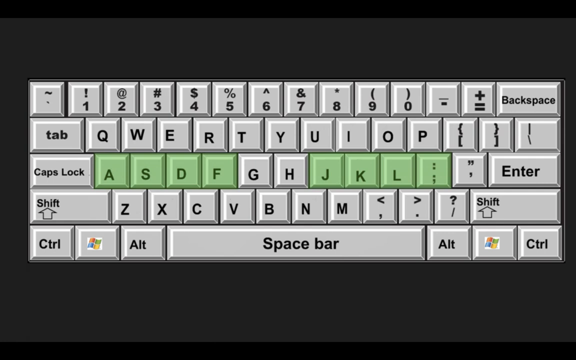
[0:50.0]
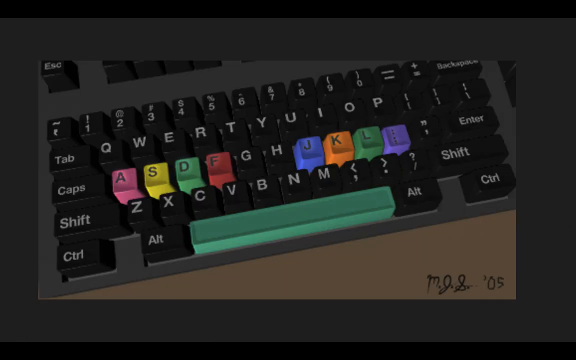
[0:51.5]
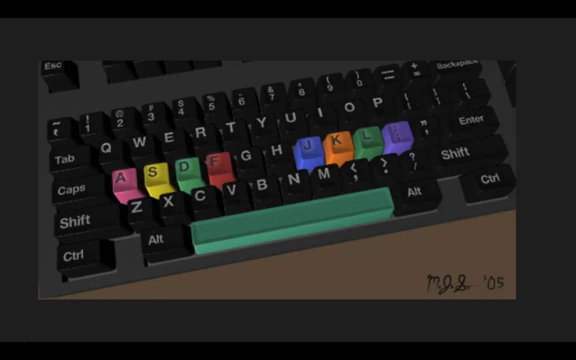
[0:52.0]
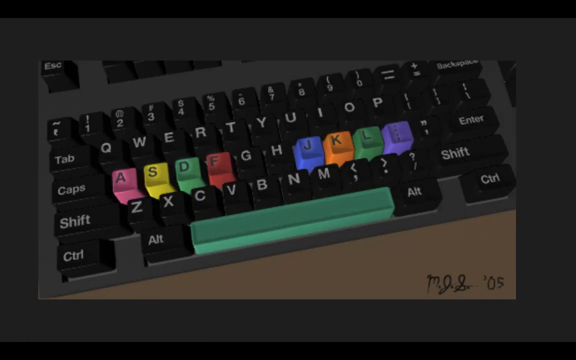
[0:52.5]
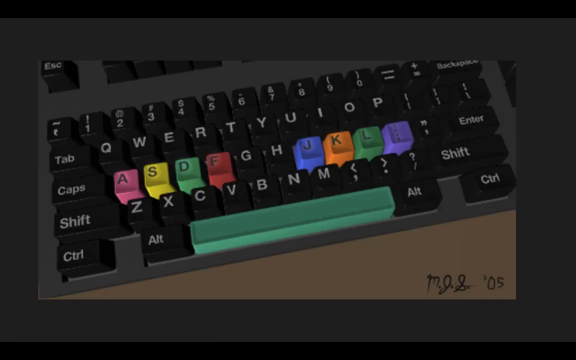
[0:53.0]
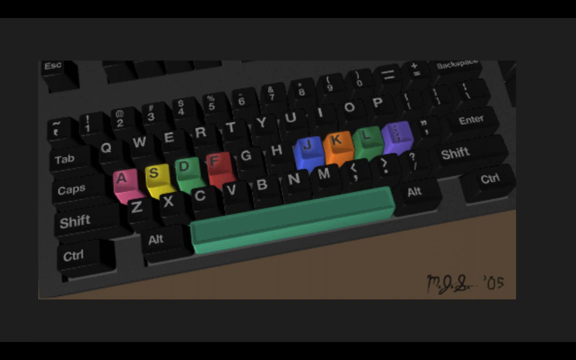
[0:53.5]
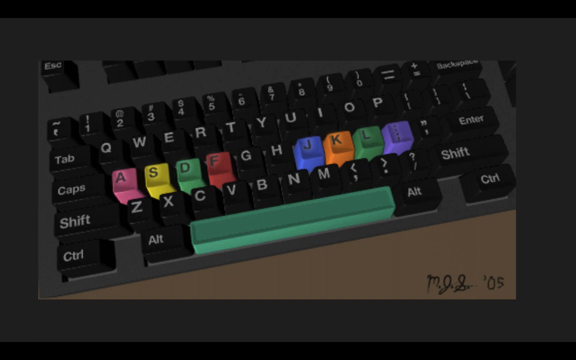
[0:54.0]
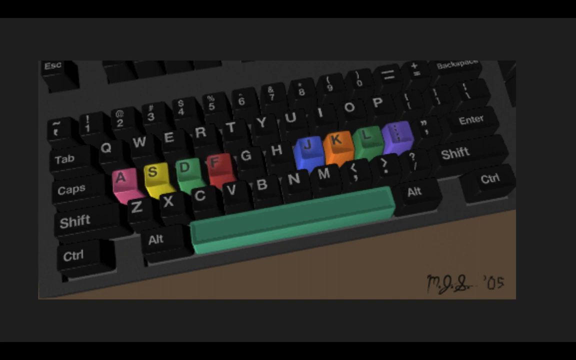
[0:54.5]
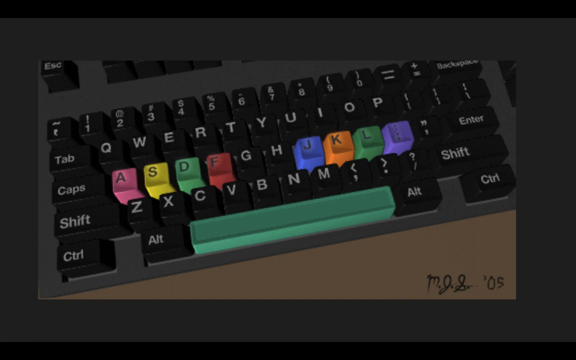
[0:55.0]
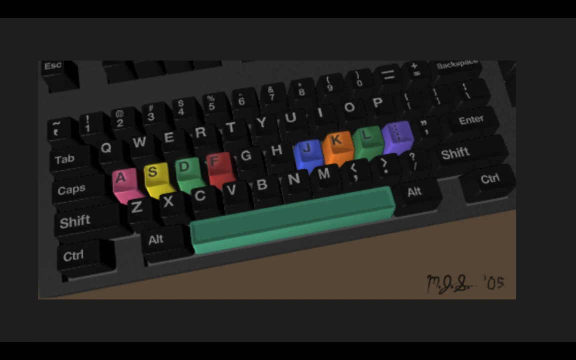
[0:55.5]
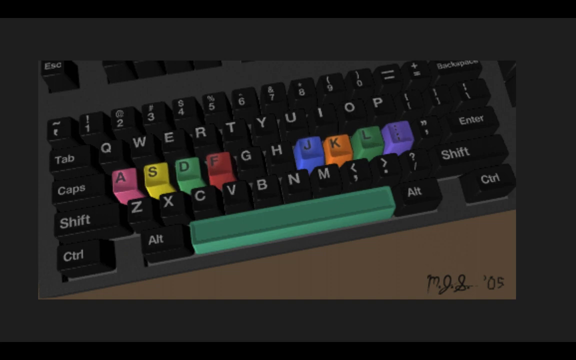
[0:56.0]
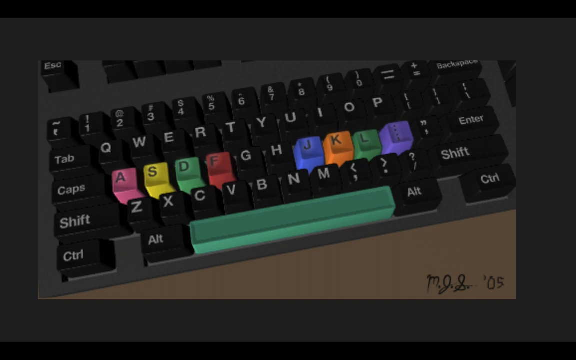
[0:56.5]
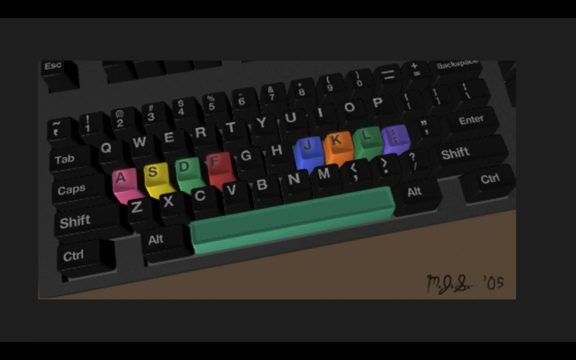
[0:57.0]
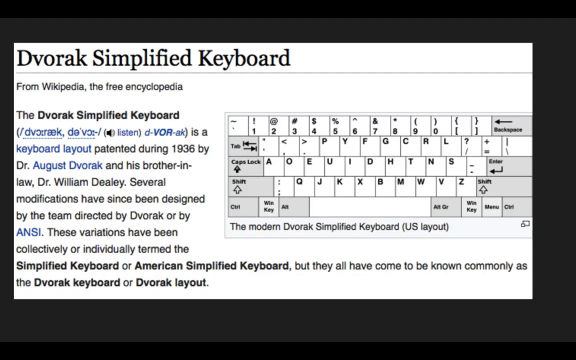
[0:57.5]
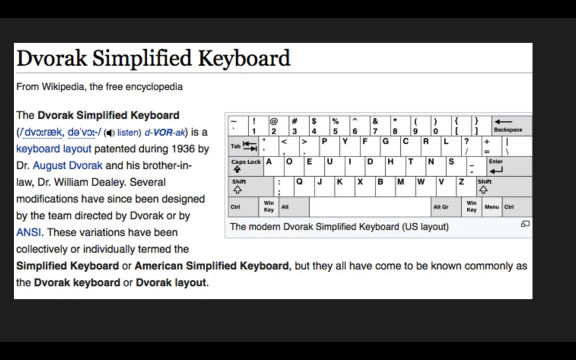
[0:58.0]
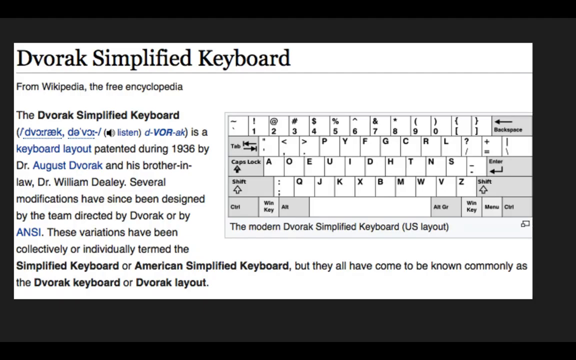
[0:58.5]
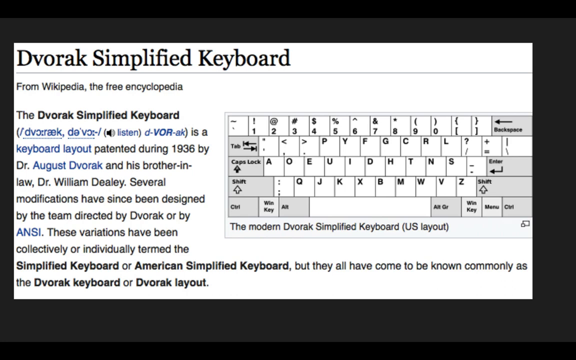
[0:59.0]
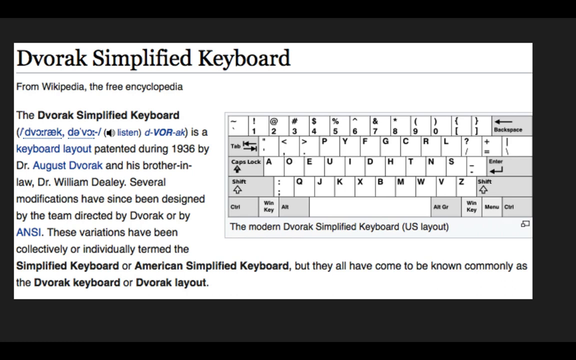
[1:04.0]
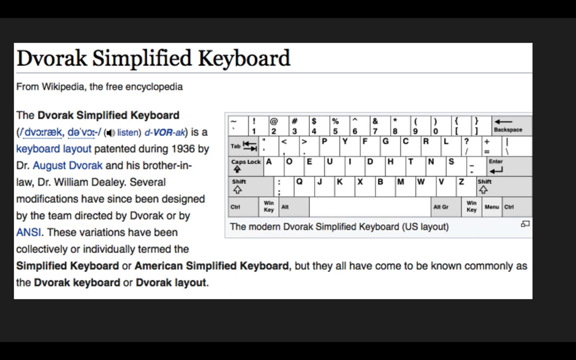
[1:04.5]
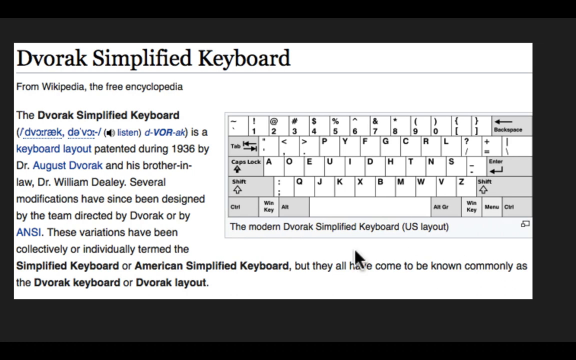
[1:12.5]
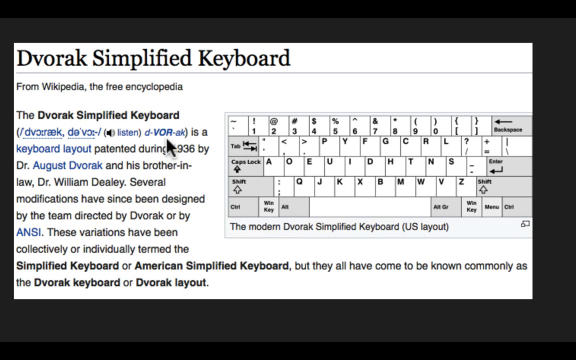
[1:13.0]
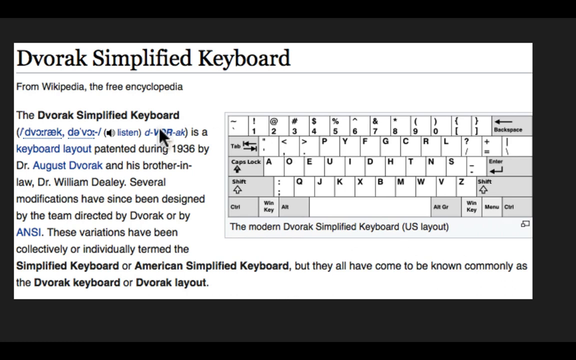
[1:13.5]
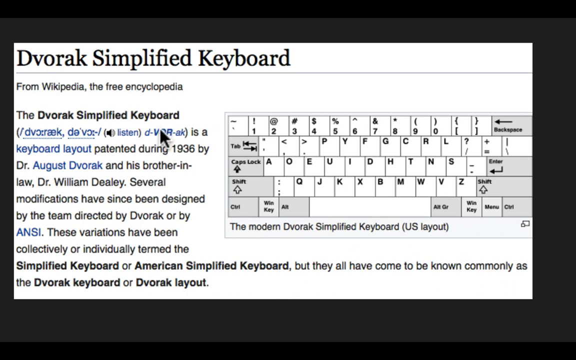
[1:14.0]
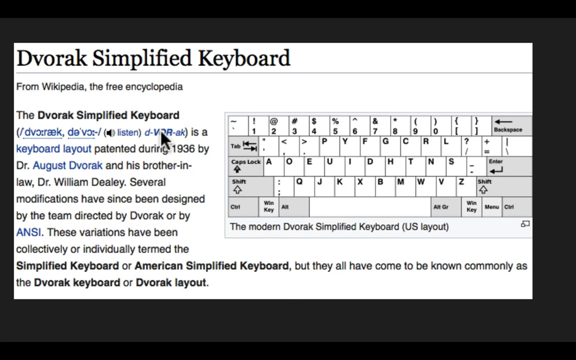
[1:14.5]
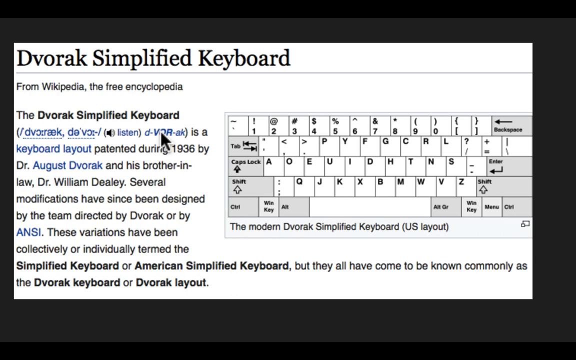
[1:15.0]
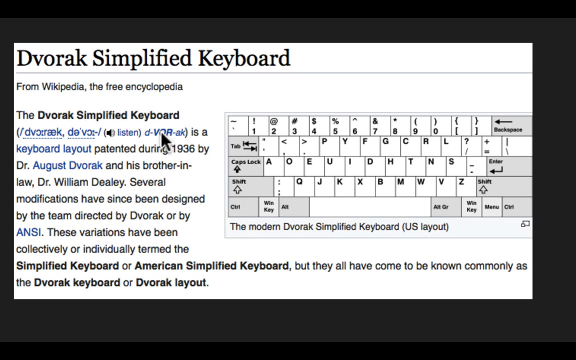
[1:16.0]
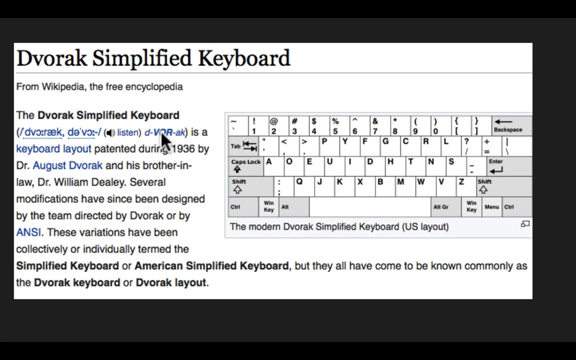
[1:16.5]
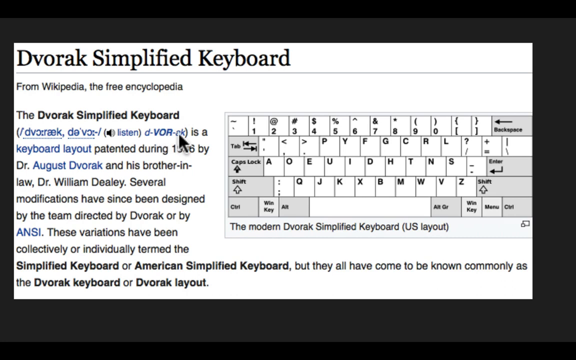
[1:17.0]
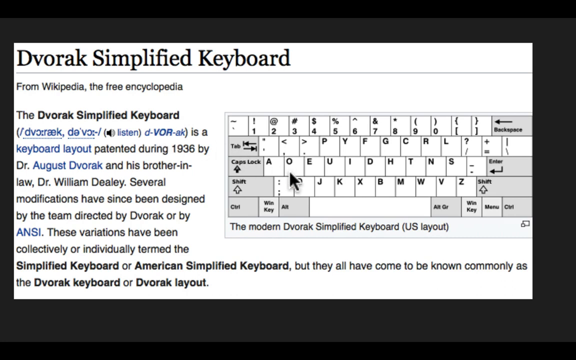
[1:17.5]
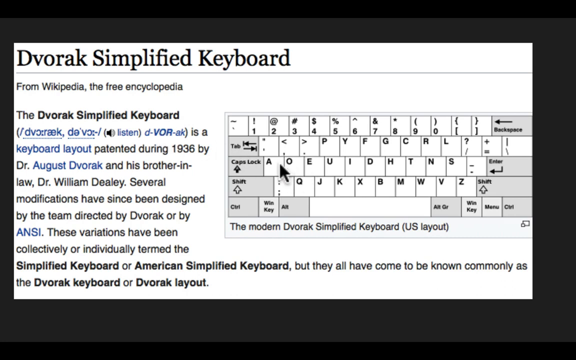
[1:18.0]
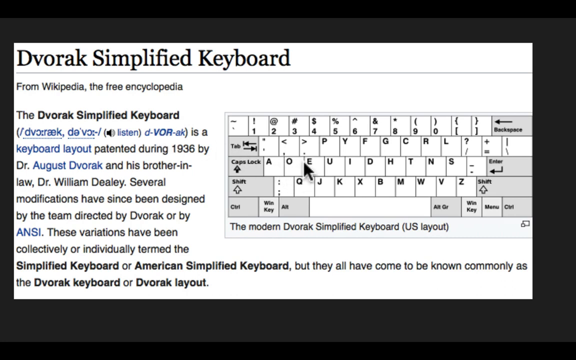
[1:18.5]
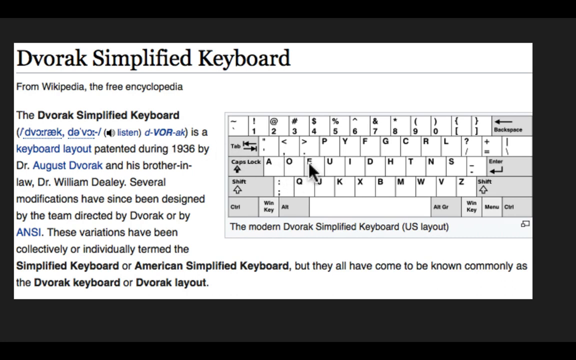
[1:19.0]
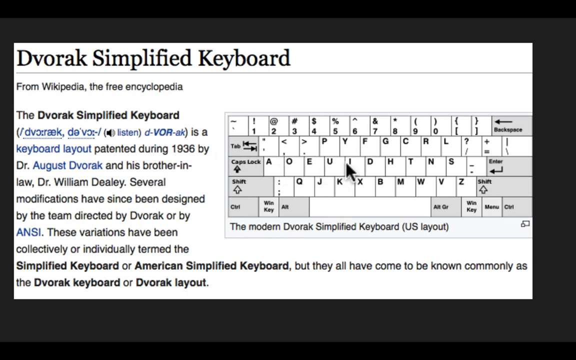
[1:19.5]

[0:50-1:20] A well-drawn keyboard appears with a definition beside it, and a cursor hovers over the definition as if illustrating something about the keyboard. Then a visual keyboard shows the keys A, S, D, F and J, K, L pressing simultaneously without any human intervention. A QWERTY keyboard follows, with A, S, D, F and J, K, L colored differently from the other keys. There is also a drawing of both the left and right human hands: the left hand's fingers rest on A, S, D and F, while the right hand's fingers rest on J, K, L and another key that is not labeled.